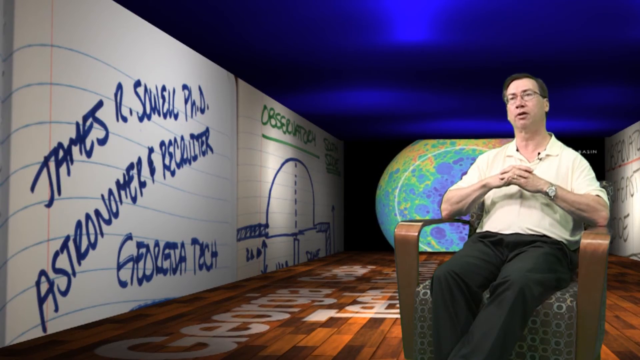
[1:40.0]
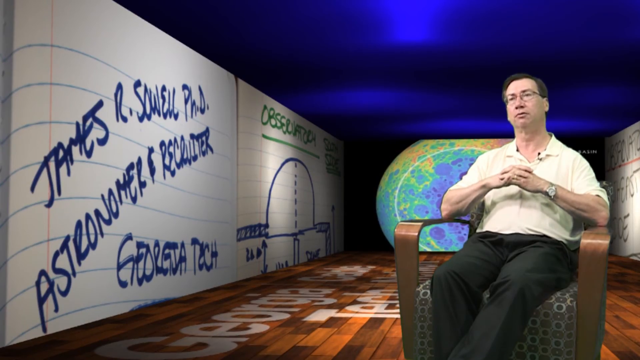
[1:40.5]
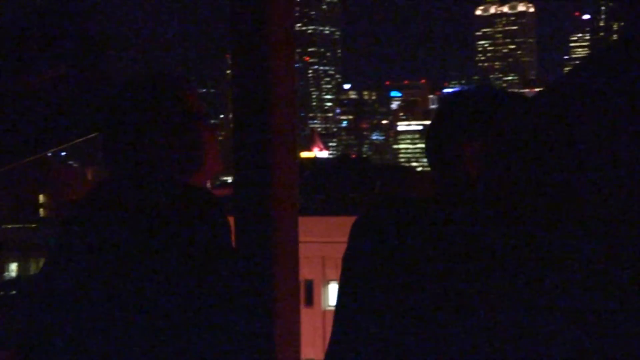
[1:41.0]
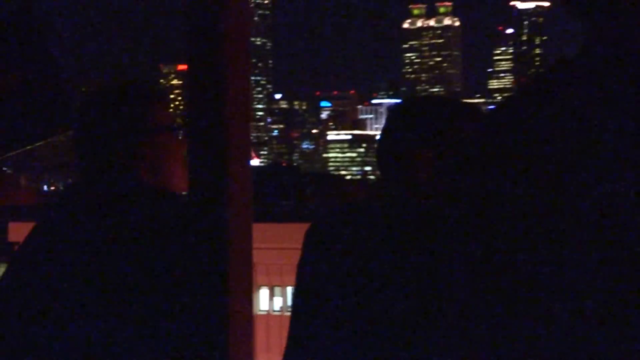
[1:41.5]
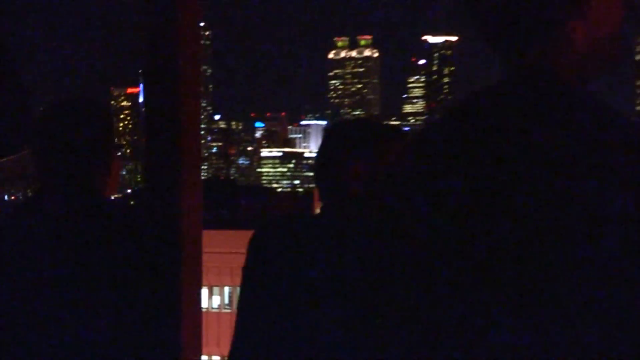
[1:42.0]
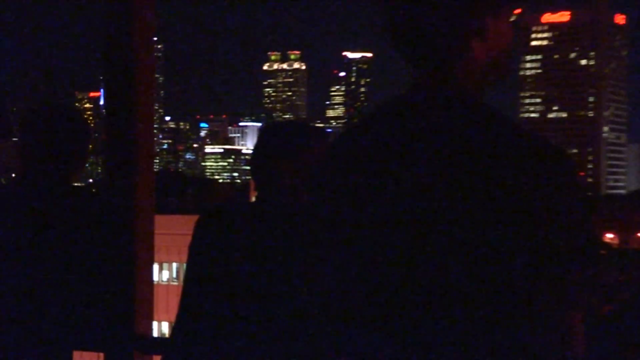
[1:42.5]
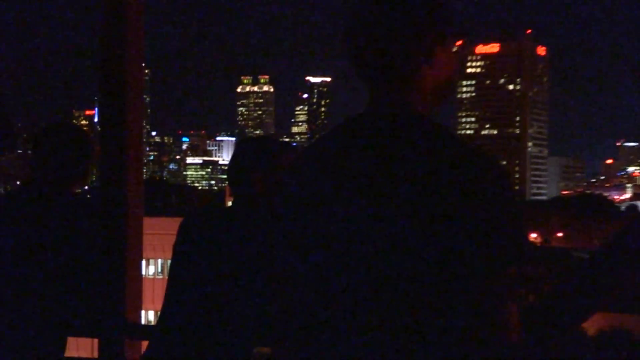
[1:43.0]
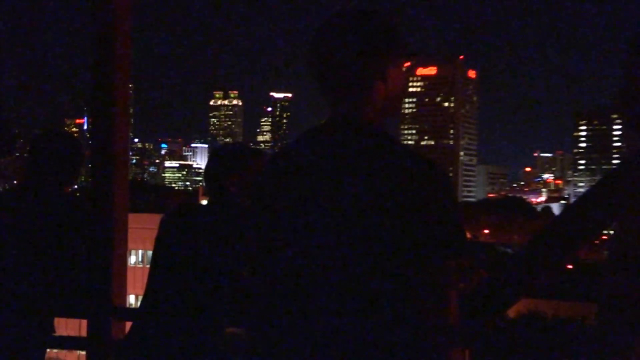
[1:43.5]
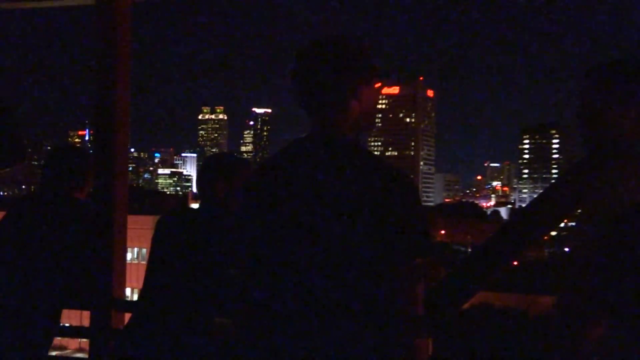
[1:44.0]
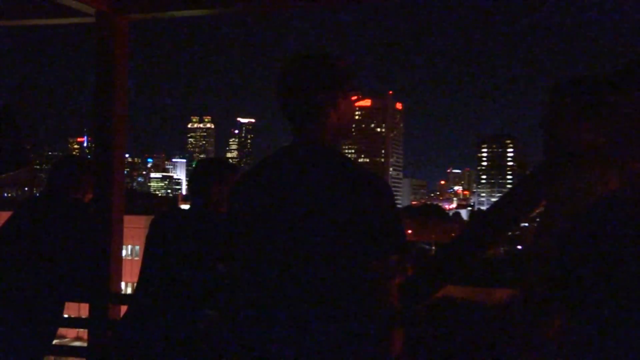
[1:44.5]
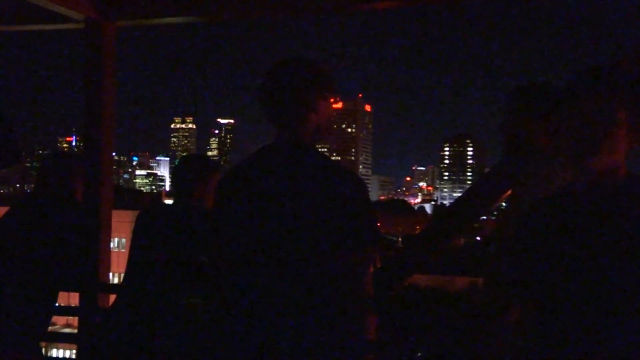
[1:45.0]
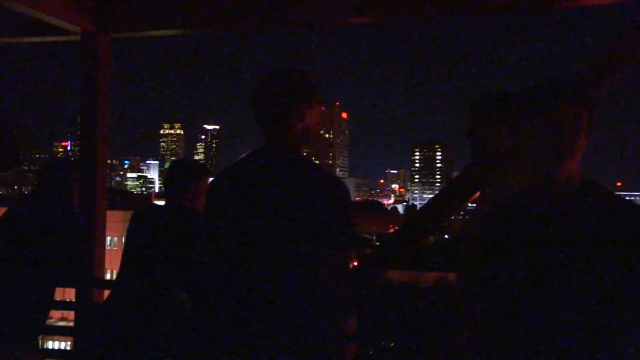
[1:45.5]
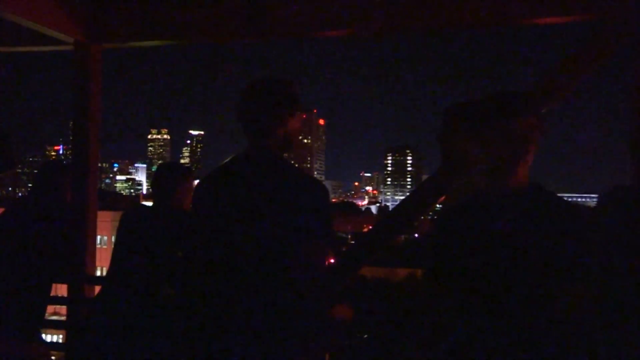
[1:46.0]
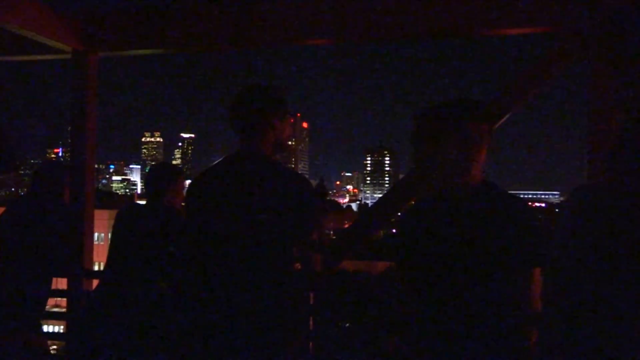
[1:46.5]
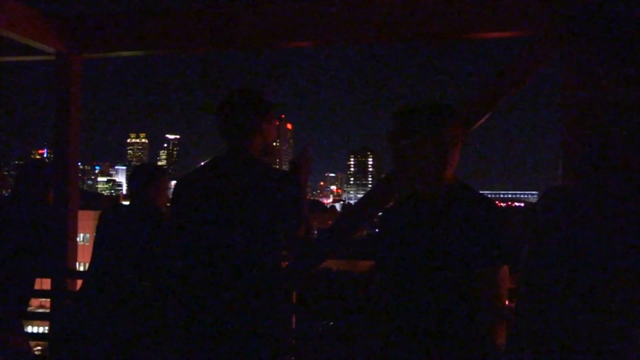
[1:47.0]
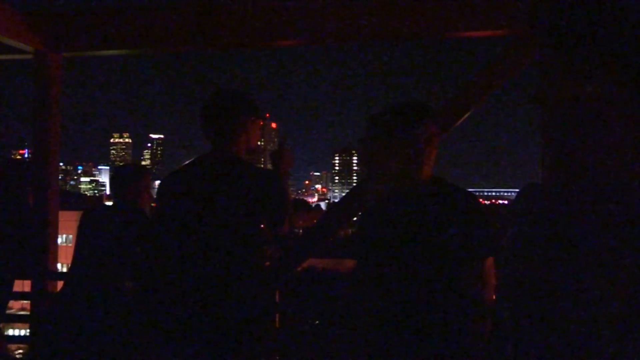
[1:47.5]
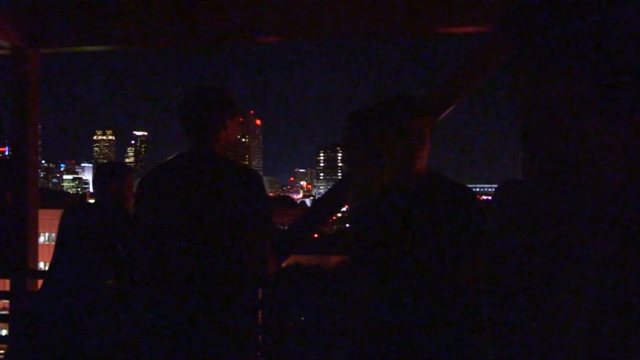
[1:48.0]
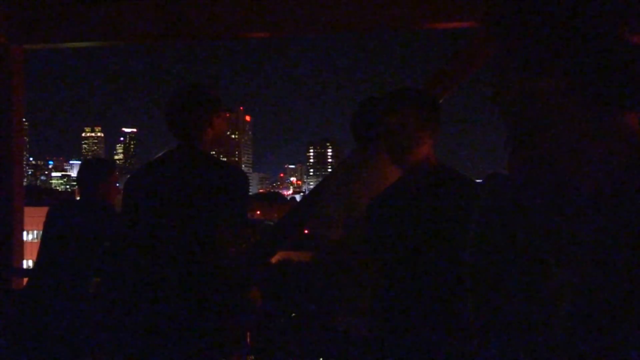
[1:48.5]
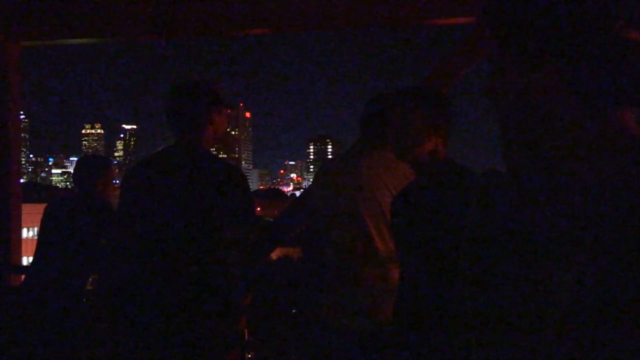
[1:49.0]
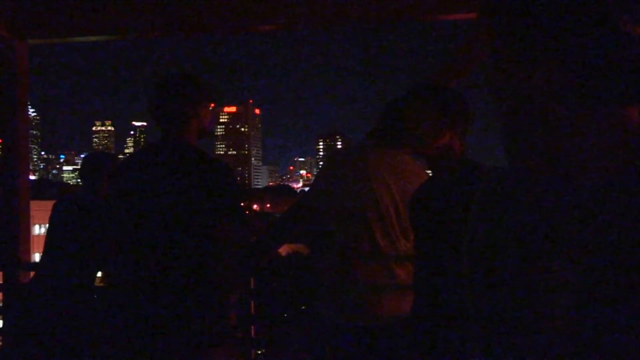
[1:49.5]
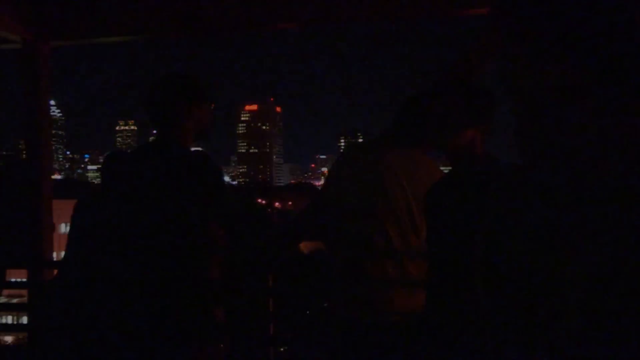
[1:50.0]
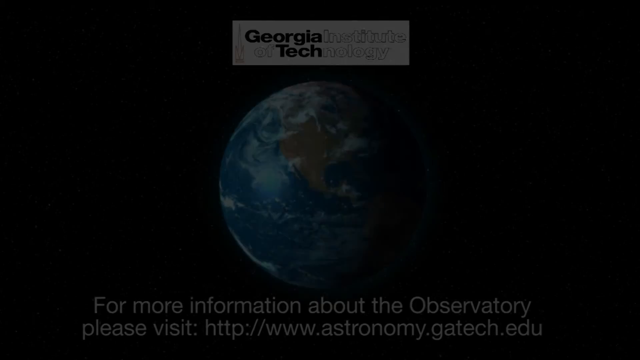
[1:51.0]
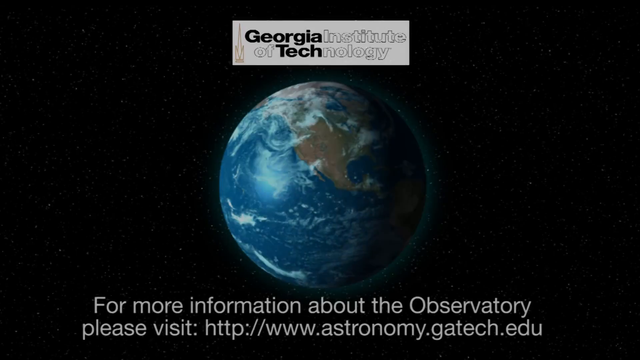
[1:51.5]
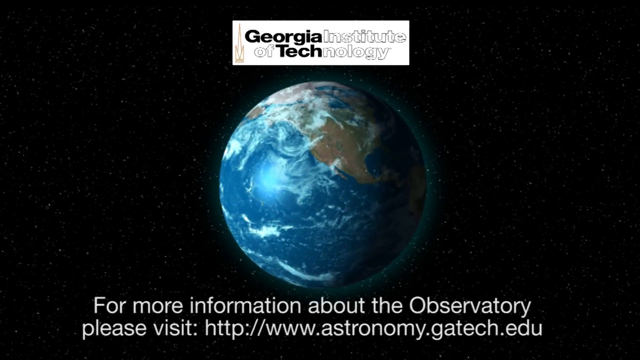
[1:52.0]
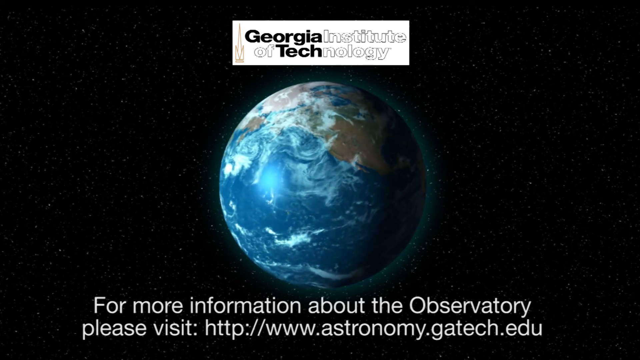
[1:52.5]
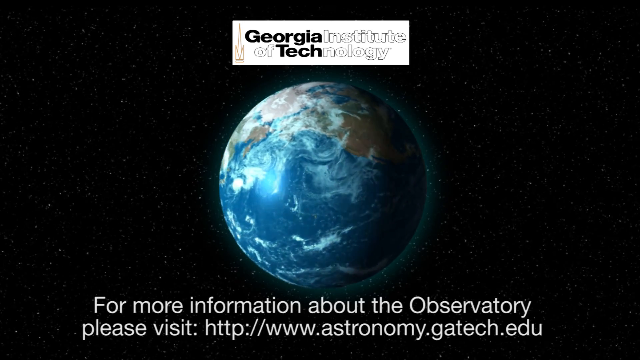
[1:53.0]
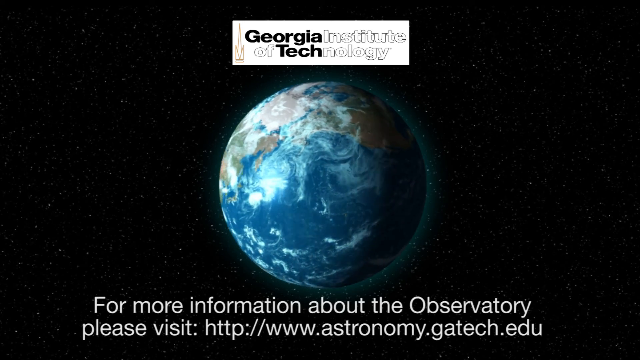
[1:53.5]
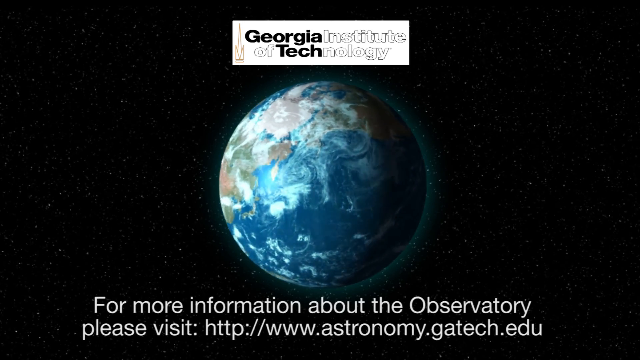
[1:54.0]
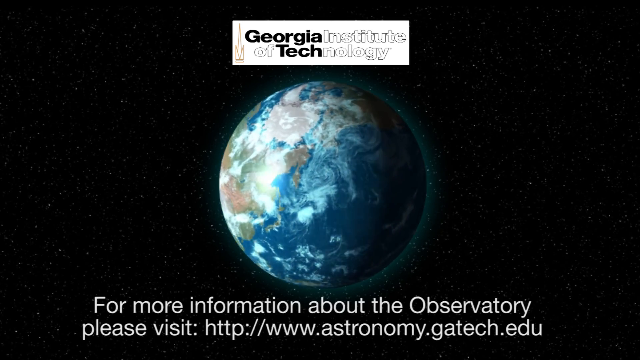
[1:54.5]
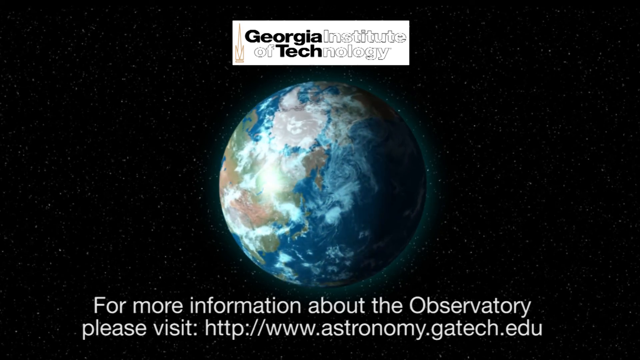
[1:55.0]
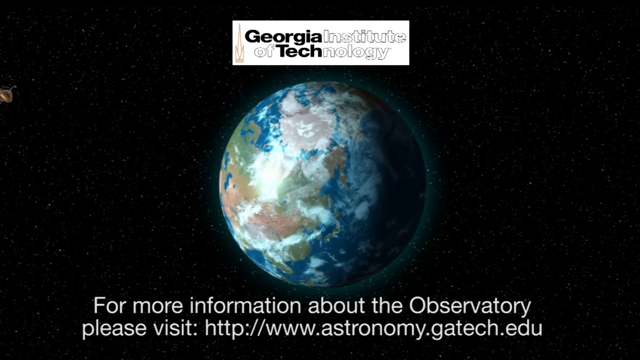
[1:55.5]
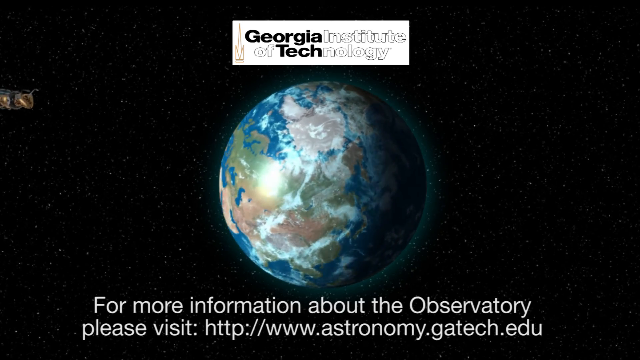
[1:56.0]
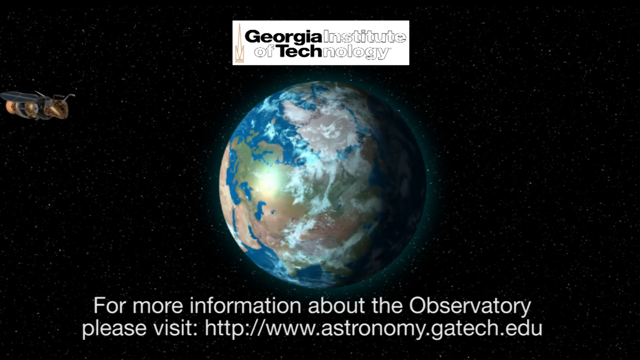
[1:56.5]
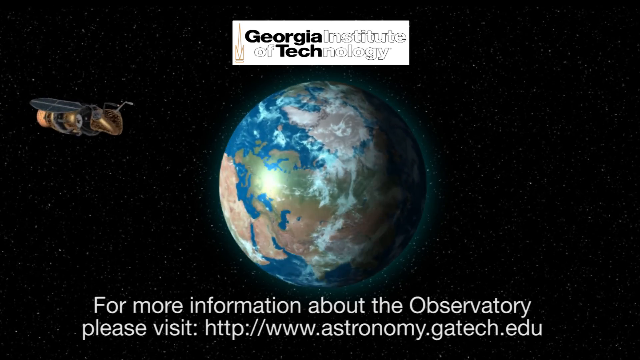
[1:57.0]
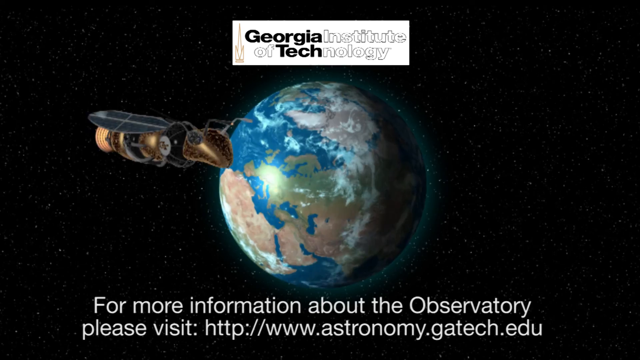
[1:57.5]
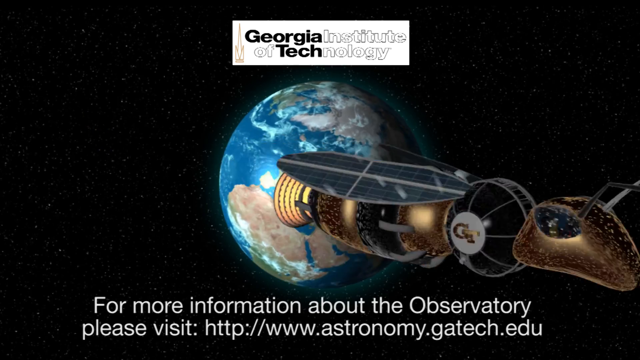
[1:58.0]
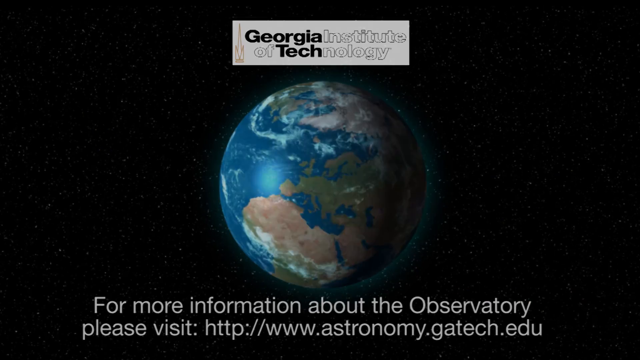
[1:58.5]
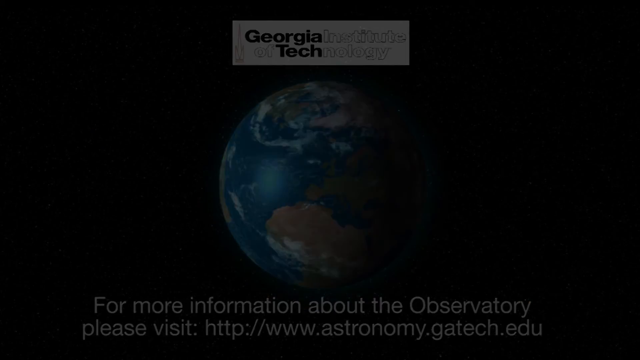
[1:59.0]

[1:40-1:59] The man in the wooden fabric chair appears briefly. The scene then changes to a group of people, probably students, standing on what could be a balcony, looking out at the night sky and a cityscape of buildings with lights, as the camera pans to the right. The scene is so dark that they cannot really be seen. Next, a black starry background with a spinning earth globe appears, with the text "for more information about the observatory, please visit http://www.astronomy.gatech.edu"; there is no s after the http. In black words on a white text box it says "Georgia Tech", and in outlined letters it says "Institute of" and then "knowledge". A scarab-type bug graphic flies all over the screen.